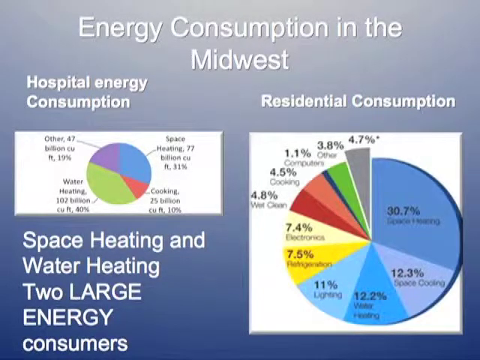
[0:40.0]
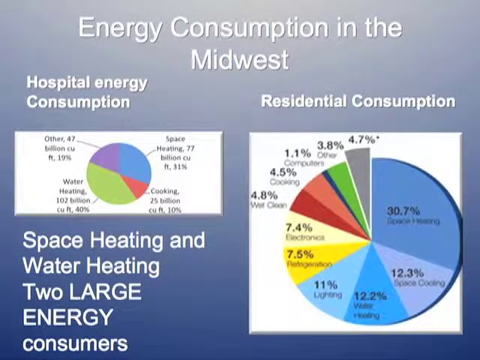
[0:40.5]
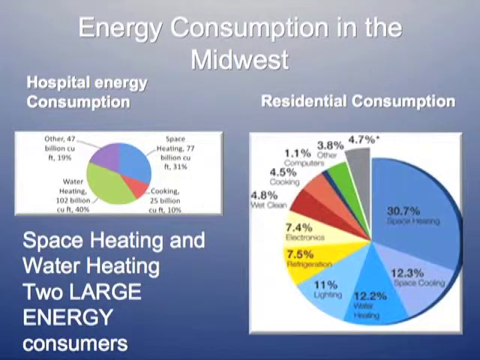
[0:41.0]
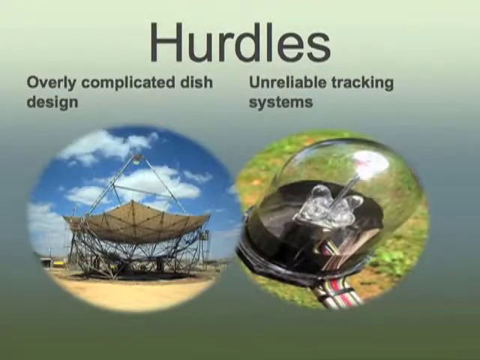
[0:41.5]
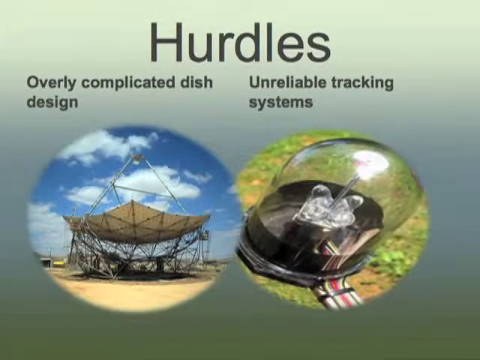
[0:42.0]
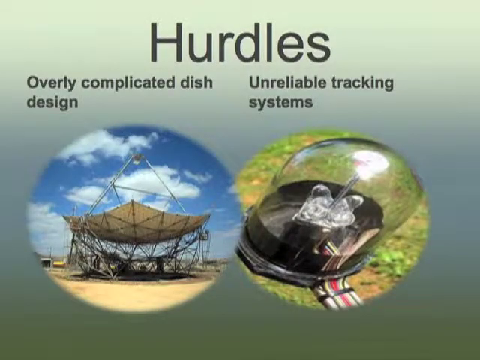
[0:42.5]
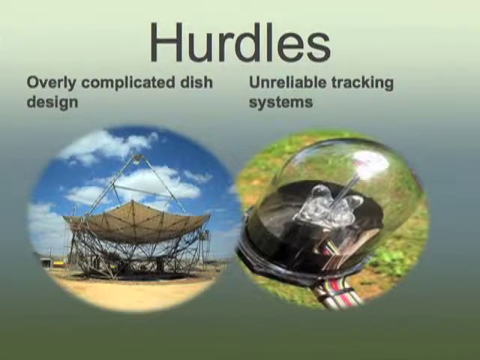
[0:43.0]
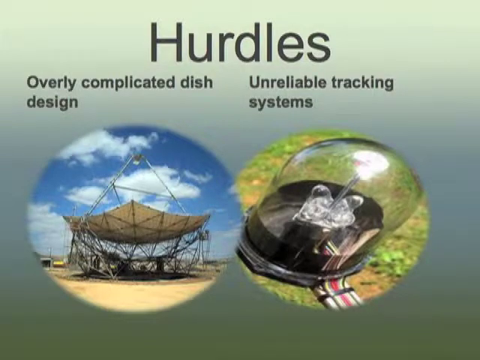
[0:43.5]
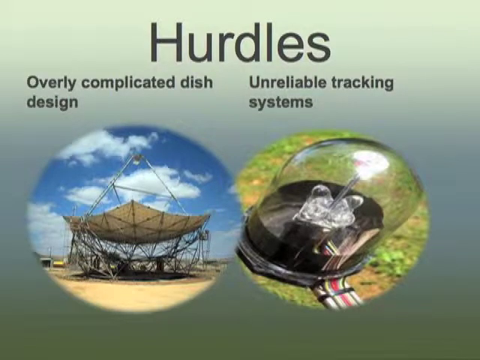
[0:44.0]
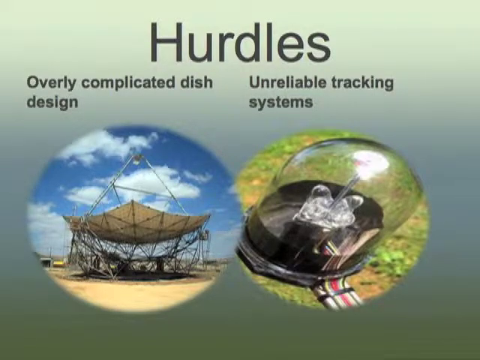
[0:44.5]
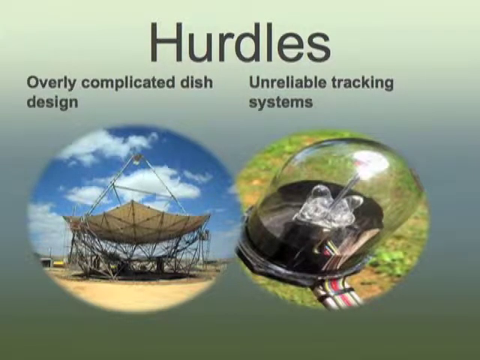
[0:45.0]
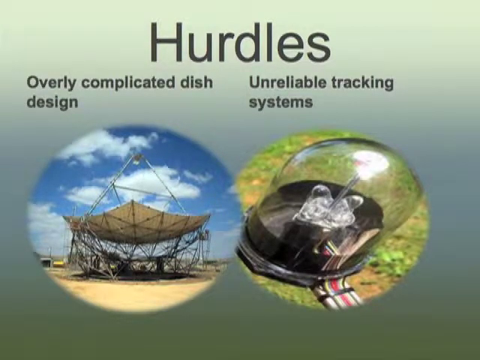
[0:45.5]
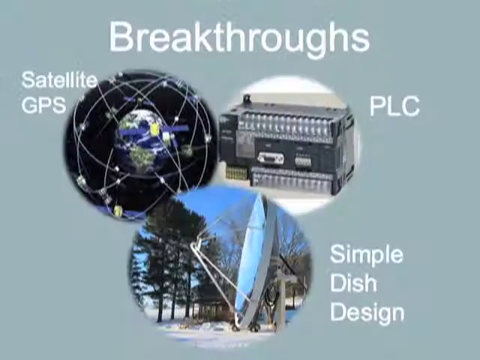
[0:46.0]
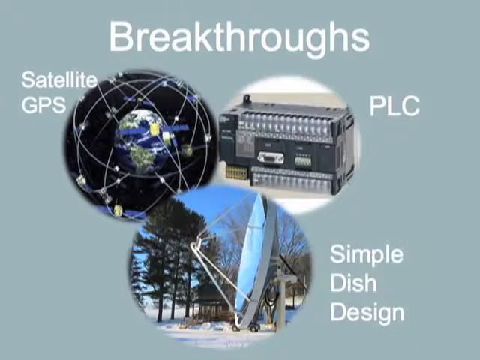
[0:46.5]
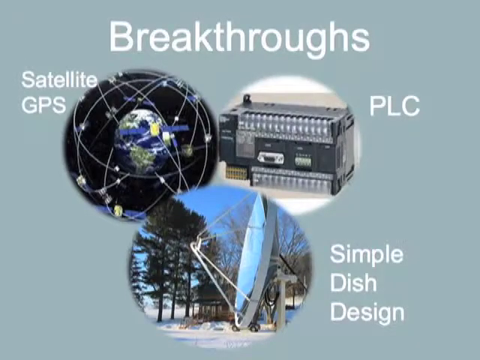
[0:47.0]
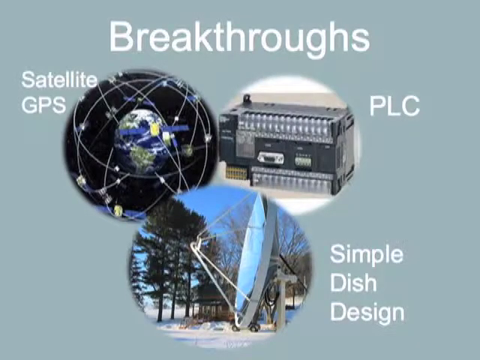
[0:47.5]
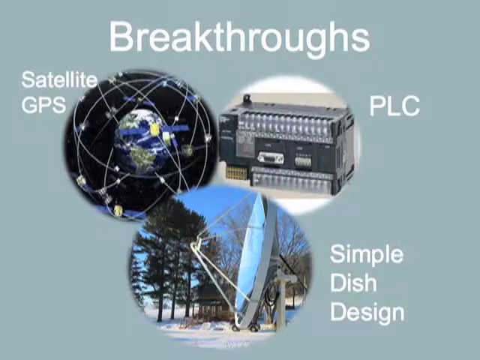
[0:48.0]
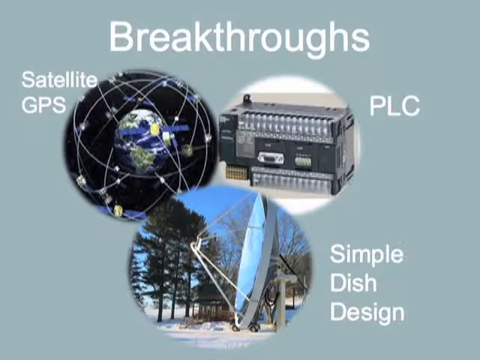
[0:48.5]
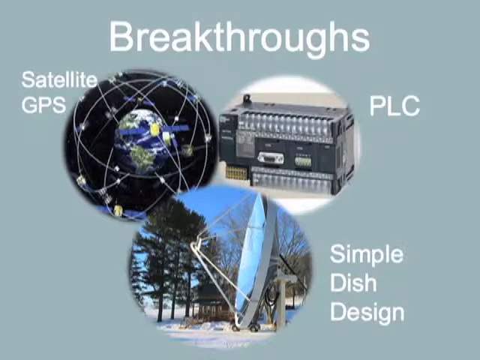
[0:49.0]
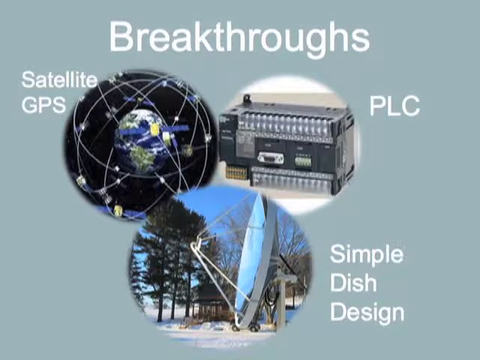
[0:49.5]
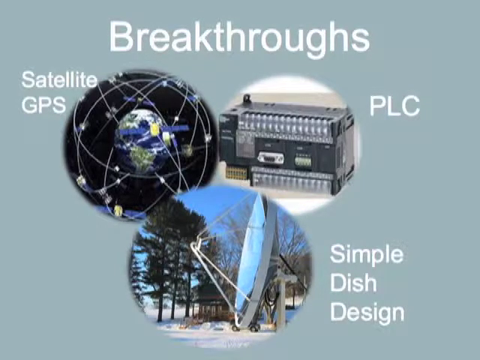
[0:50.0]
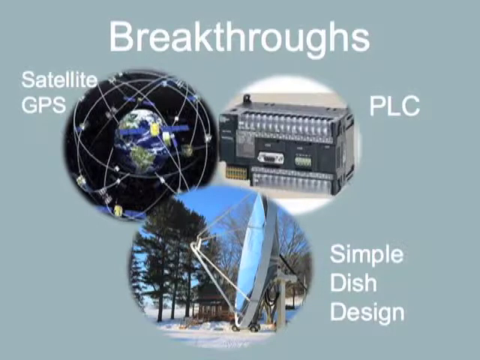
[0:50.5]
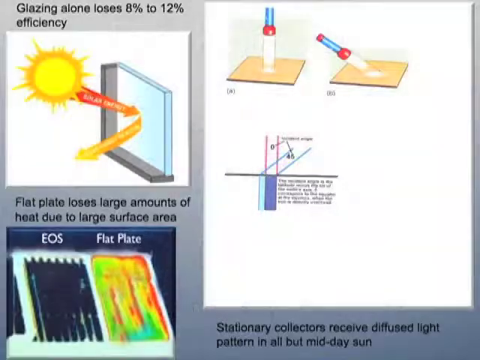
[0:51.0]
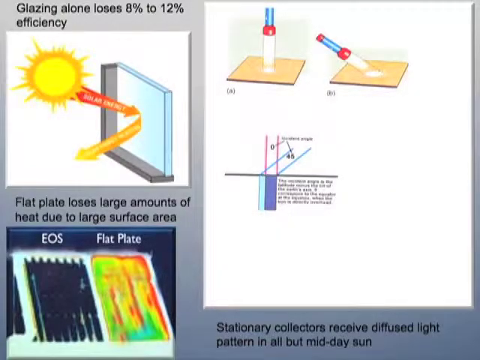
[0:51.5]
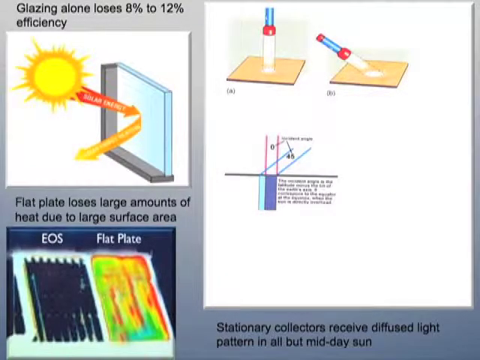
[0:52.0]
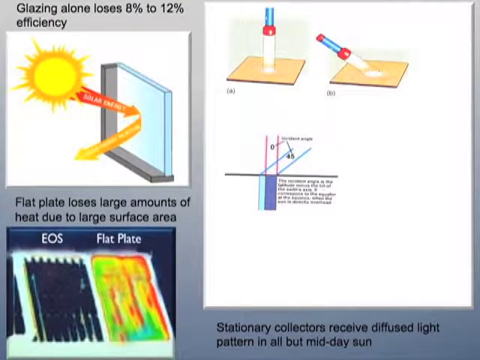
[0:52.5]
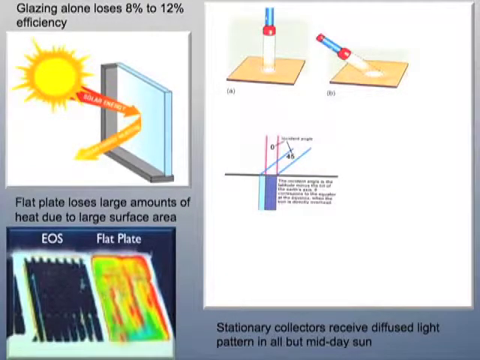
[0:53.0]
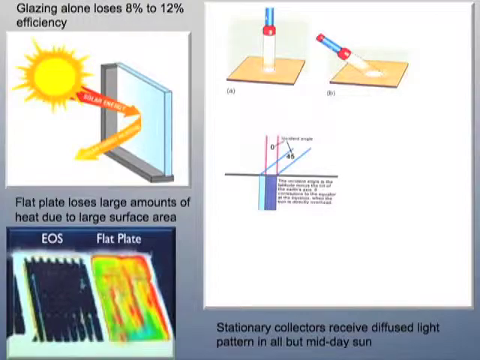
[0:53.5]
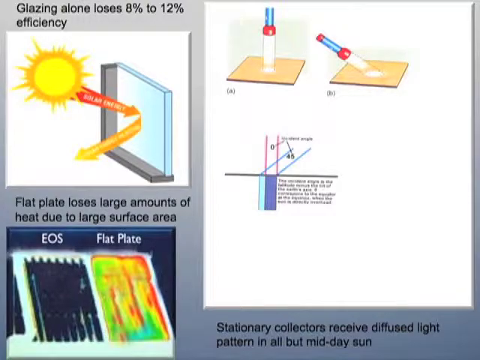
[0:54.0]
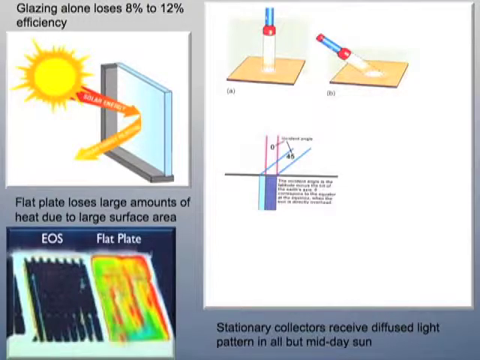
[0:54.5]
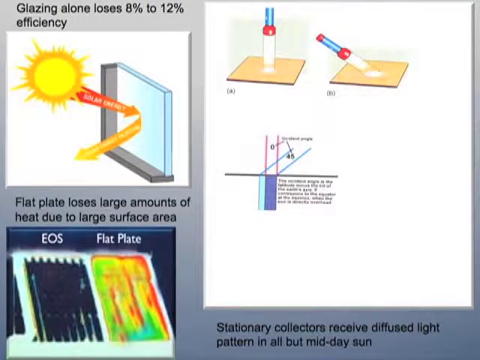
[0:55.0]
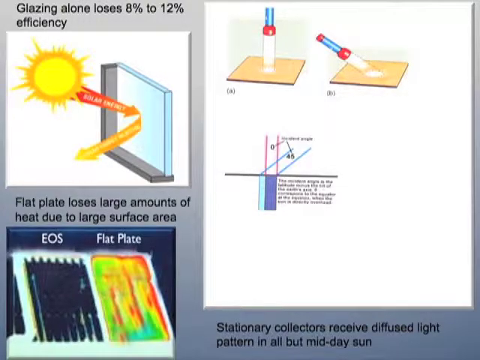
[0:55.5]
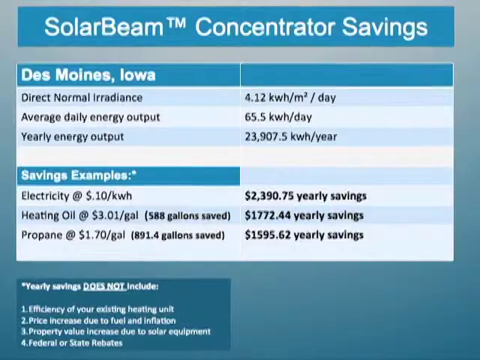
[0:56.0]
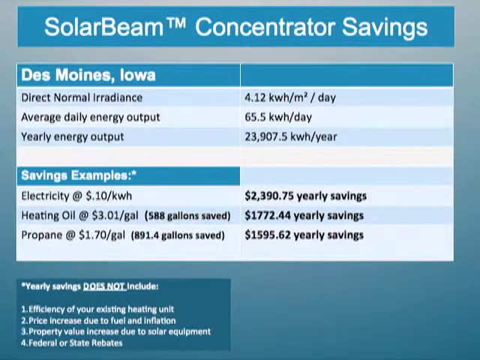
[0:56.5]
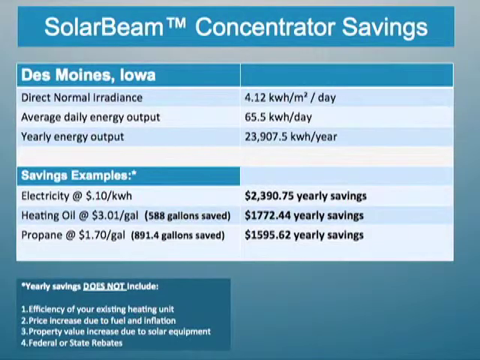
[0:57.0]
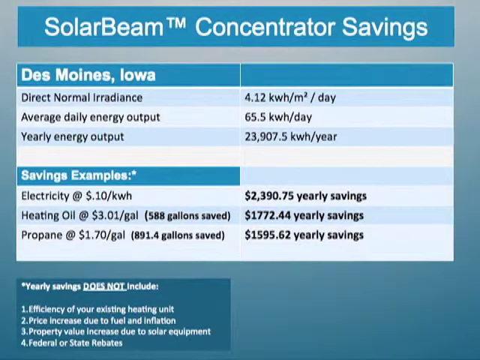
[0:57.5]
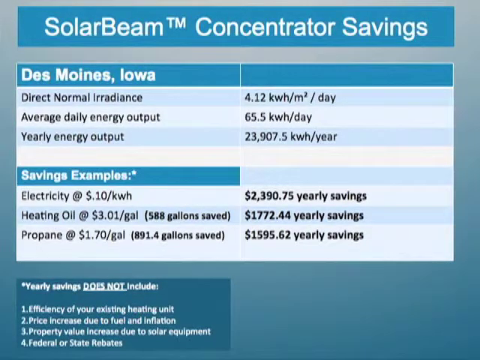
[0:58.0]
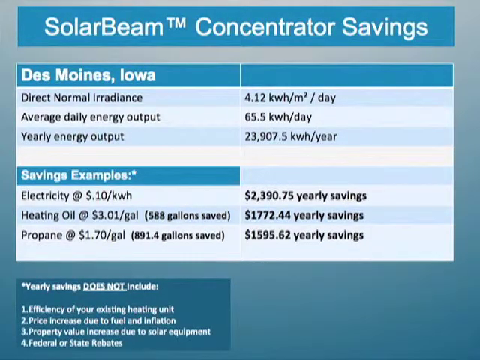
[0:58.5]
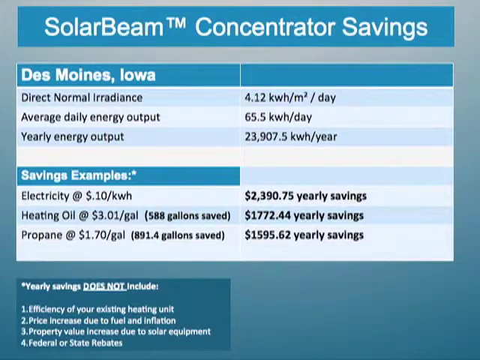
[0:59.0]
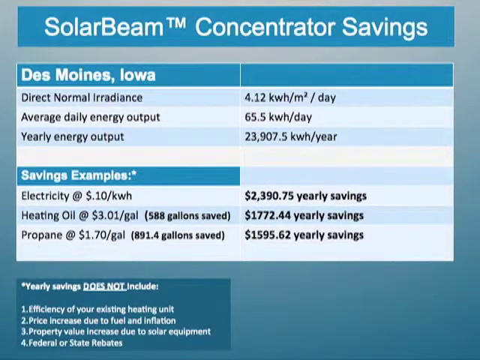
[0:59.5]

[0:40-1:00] A section called "hurdles" shows two circles with pictures inside and explanations: "overcomplicated dish design" and "unreliable tracking systems." The dish design picture shows a cloudy day with a large dish that looks kind of upside down, almost like a large upside-down umbrella, lying on sand with its structure on the ground. The unreliable tracking systems picture is from a grassy area and shows a glass dome-looking figure like a snow globe without snow, with what looks like a figurine on its side, outside with the sun shining on it. Next is a section called "breakthroughs," with pictures connected together: "Satellite," "GPS," "PLC" and "simple dish design," in three circles all connected. The satellite picture looks like a globe with lines running through it and little lights; it appears to show South America with blue representing water, and possibly a little of North America. The PLC picture shows a large metal box-like object that is not clearly identifiable. The simple dish design picture is a satellite dish turned on its side with a lot of trees around it. More information follows with colorful illustrations: the sun drawn next to a window, describing "glazing alone loses 8% to 12% efficiency," and information saying "flat plate loses large amounts of heat to the large surface area," with more illustrations. Then a screen reads "Solar beam concentrated savings in Des Moines, Iowa," with a list including direct normal irradiance, yearly energy output and examples of savings. It is on a teal or light blue and white screen, with black lettering. Beneath the chart on the left is a disclaimer that says "yearly savings does not include" and apparently something about the efficiency of an existing heating unit; it is cut off because the screen is not large enough to hold the whole disclaimer box.